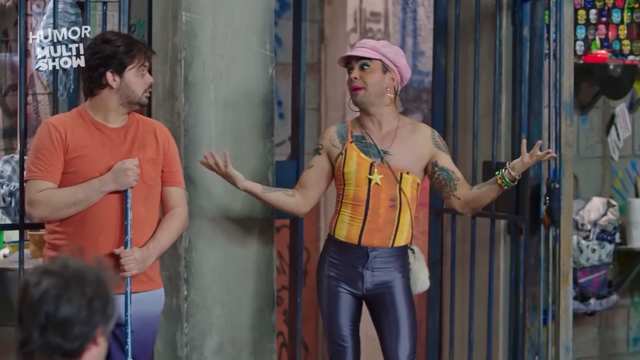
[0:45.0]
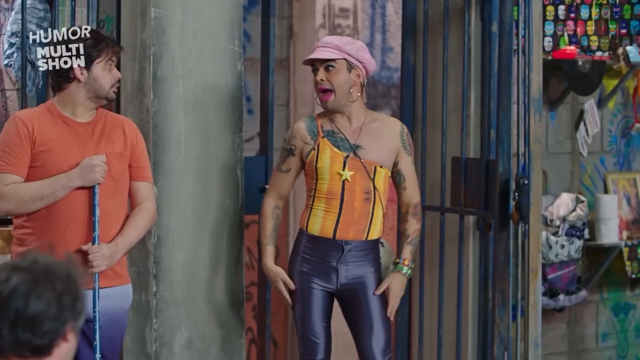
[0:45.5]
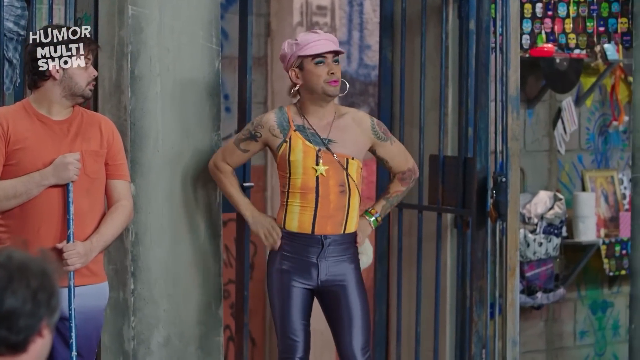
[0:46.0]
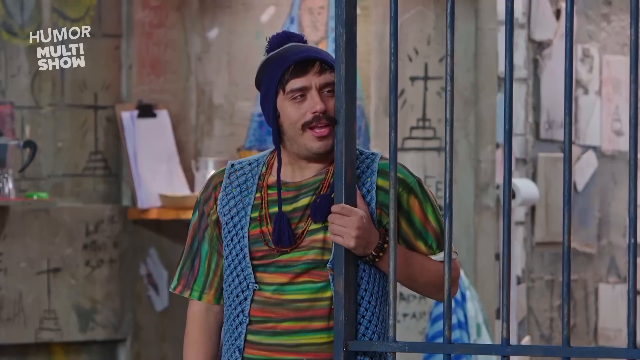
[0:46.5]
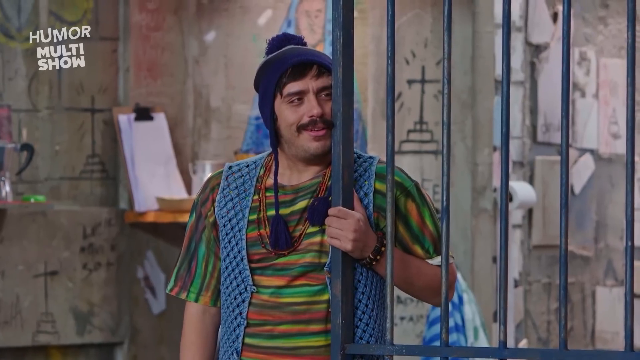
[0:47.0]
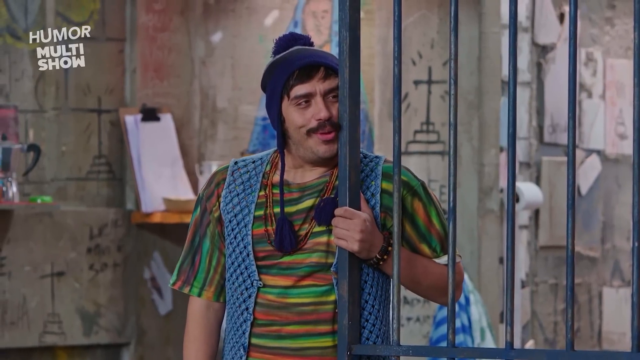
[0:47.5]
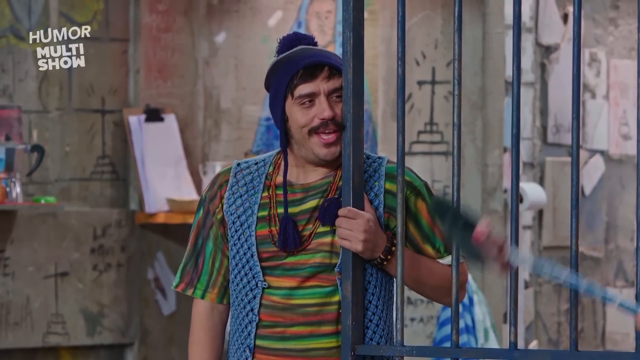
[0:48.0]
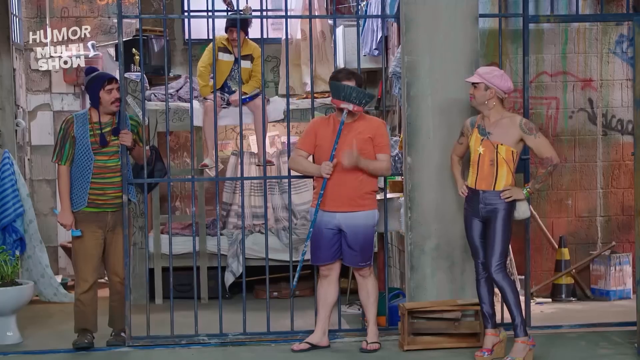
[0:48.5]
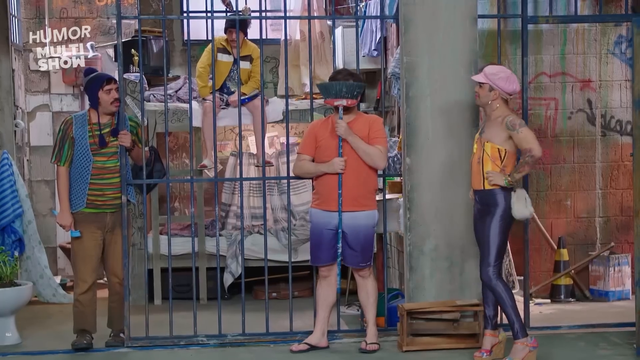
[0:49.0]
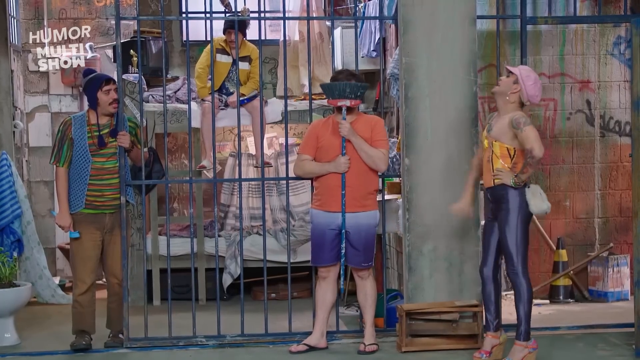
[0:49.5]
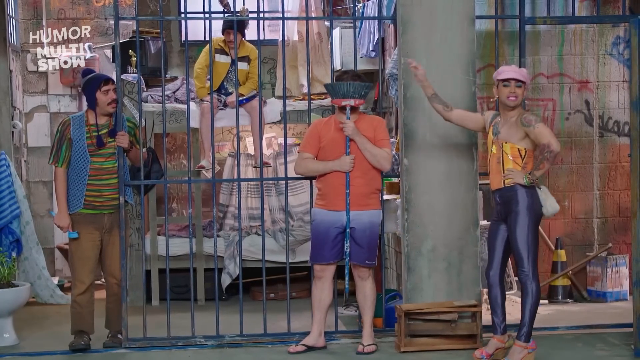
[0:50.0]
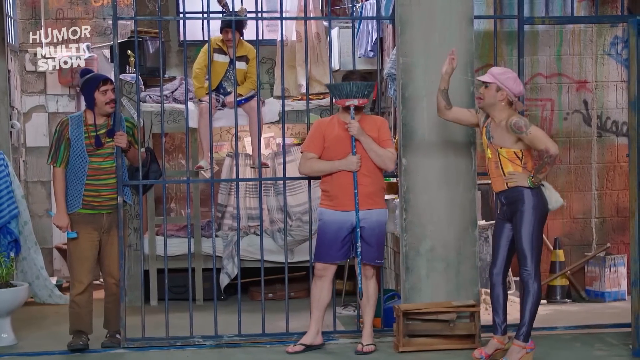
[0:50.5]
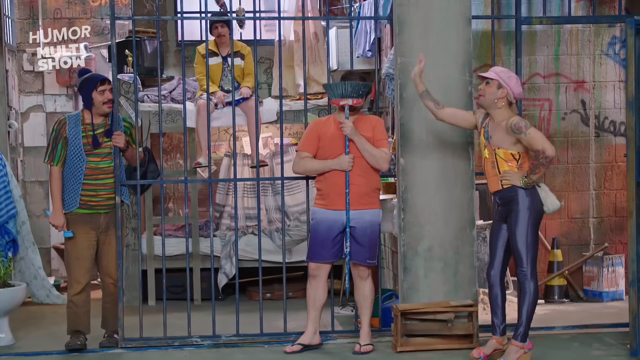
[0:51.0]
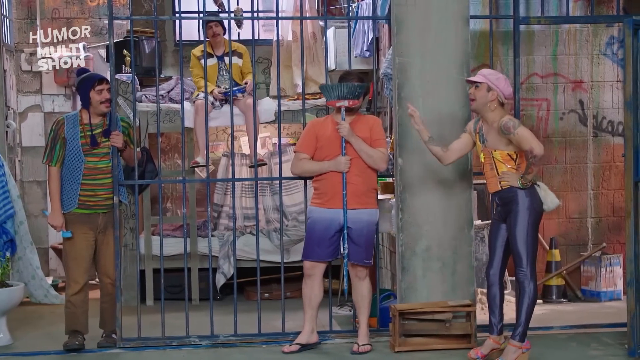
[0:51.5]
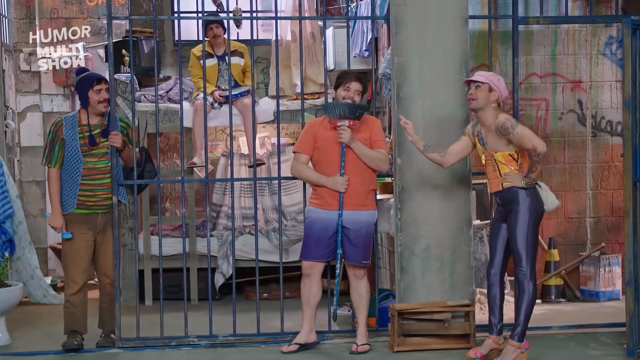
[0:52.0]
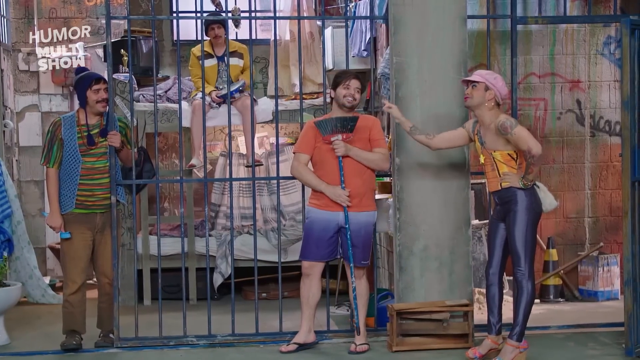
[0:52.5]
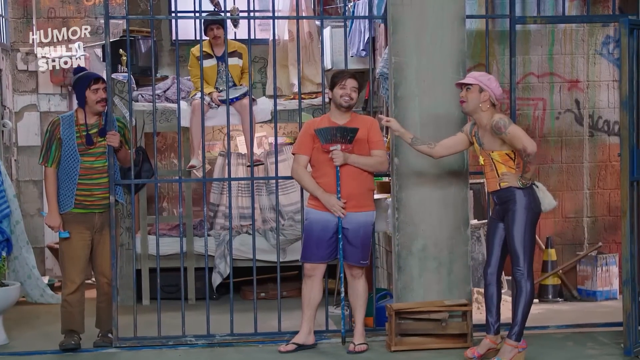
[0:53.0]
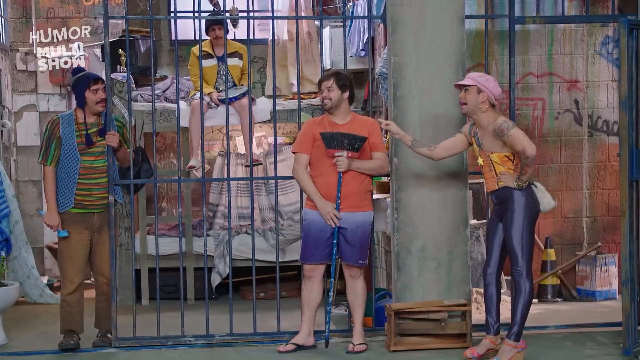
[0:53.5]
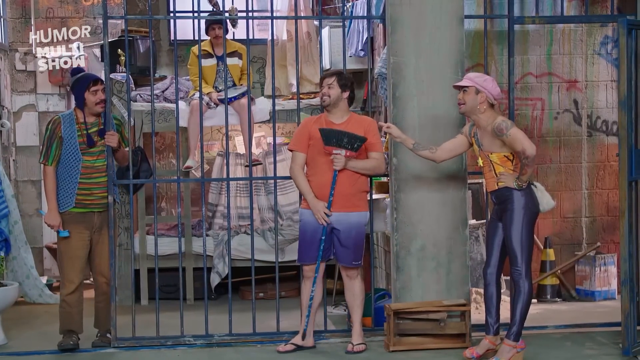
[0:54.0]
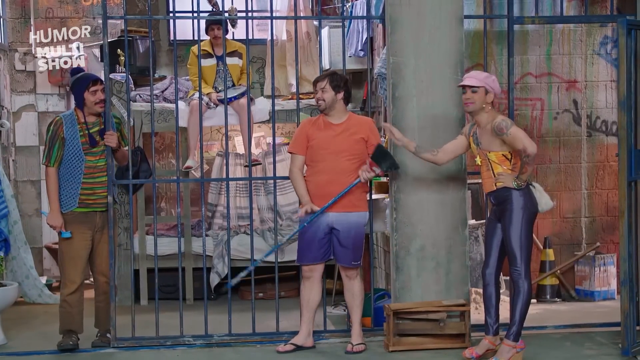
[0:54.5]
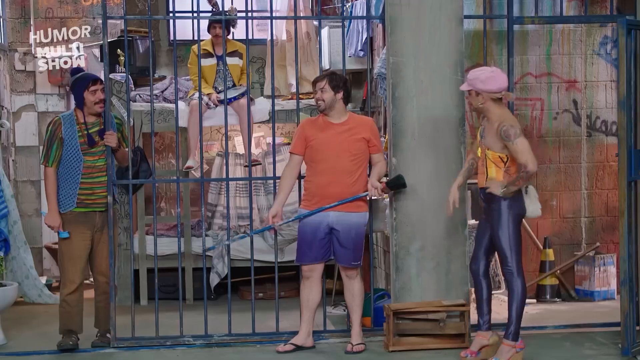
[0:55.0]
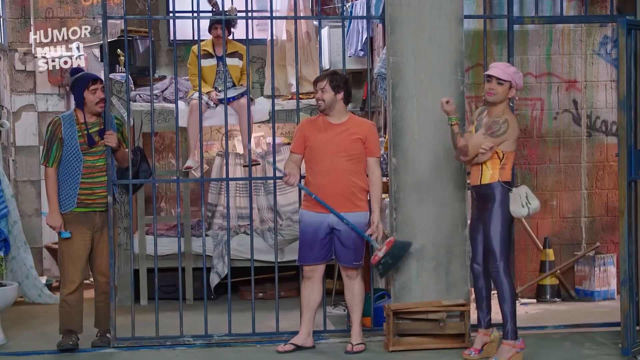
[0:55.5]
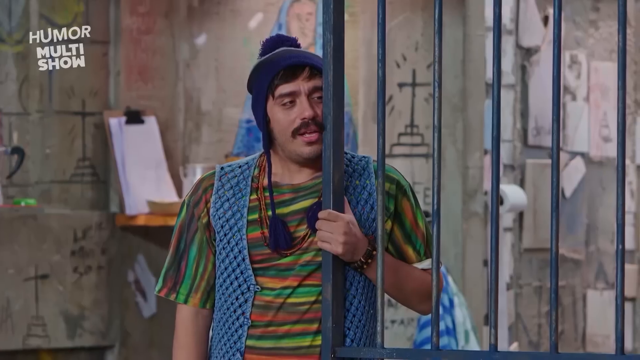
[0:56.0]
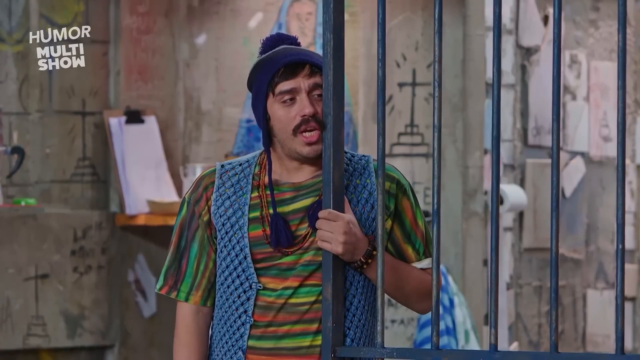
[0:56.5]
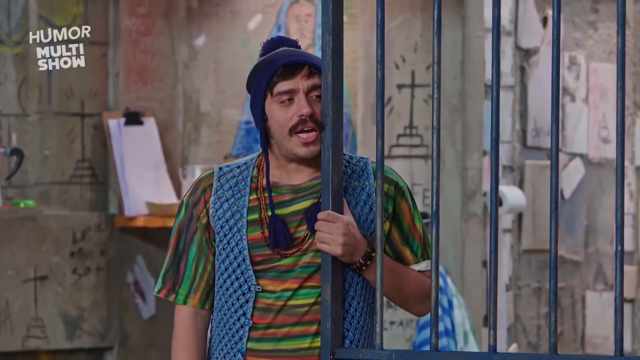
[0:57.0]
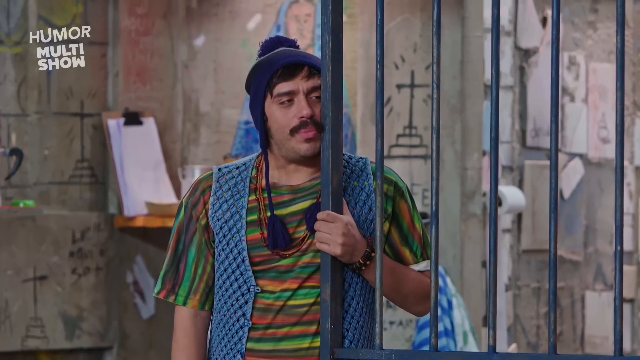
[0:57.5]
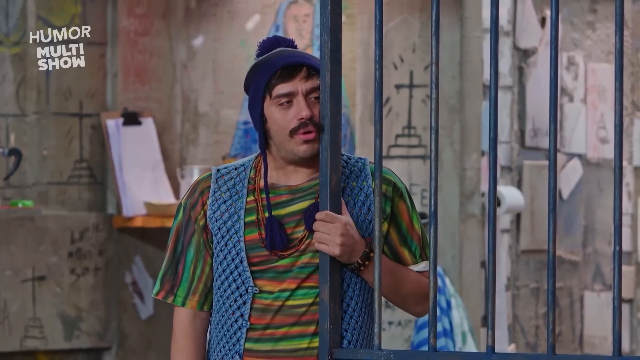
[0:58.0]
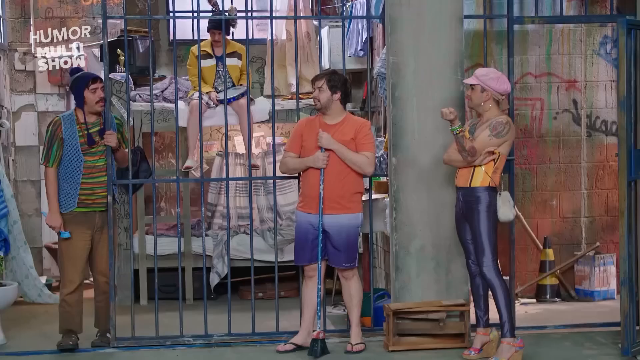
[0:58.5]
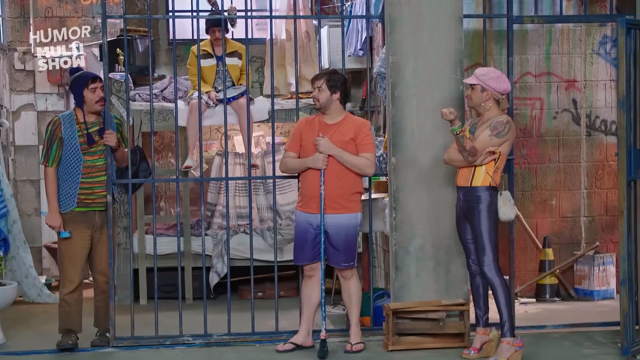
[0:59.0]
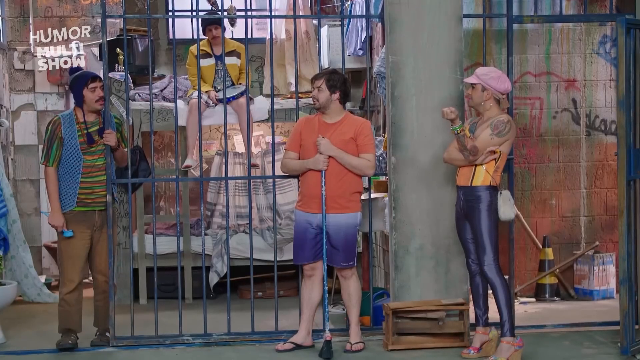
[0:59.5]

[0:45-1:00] In the jail cell, off to the right, the transvestite prostitute explains something to the others with her hands on her hips, wearing a hat. The man in the orange shirt puts a broom over his face and acts embarrassed. The man in the hat with the pom-pom on top keeps saying flirty things to the transvestite prostitute, which embarrasses the man in the orange shirt. Meanwhile, a man sitting on a bunk bed behind those two just observes. There is graffiti on the walls and metal bars around the place. The man in the pom-pom hat has a mustache and wears a blue vest and a multicolored shirt; he holds something in his hand down by his thigh, so it cannot be made out. They all seem to be listening to him, and he seems to be the one saying all these things.